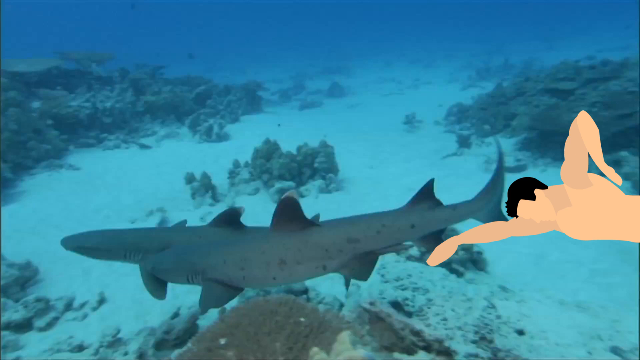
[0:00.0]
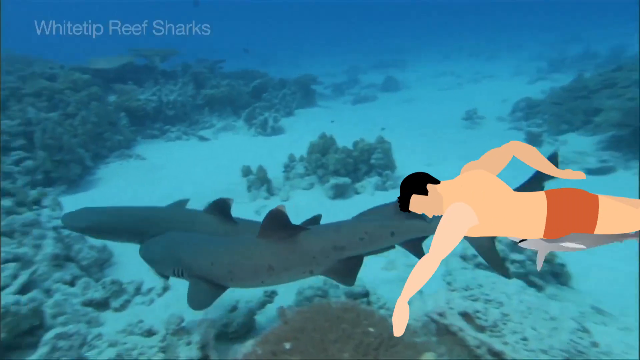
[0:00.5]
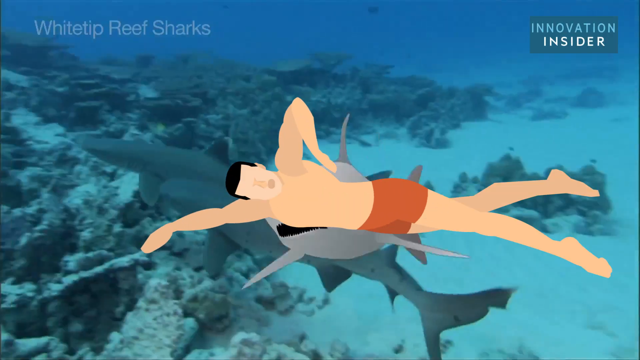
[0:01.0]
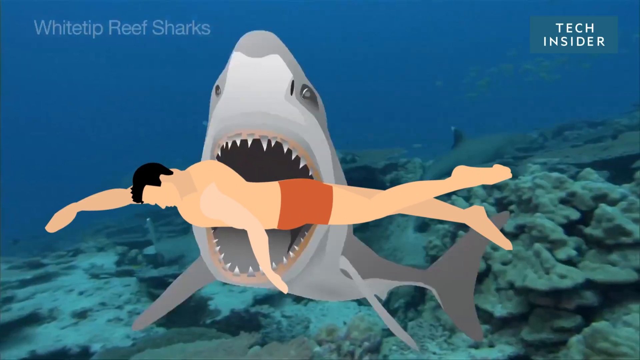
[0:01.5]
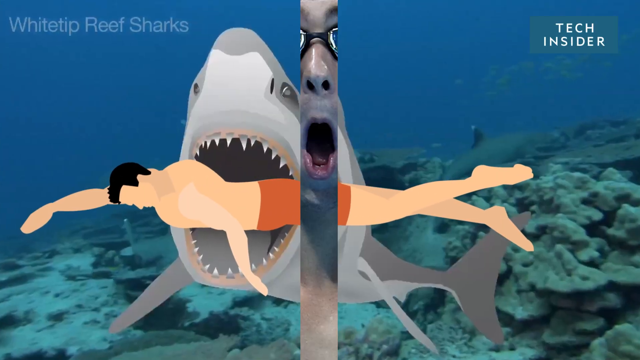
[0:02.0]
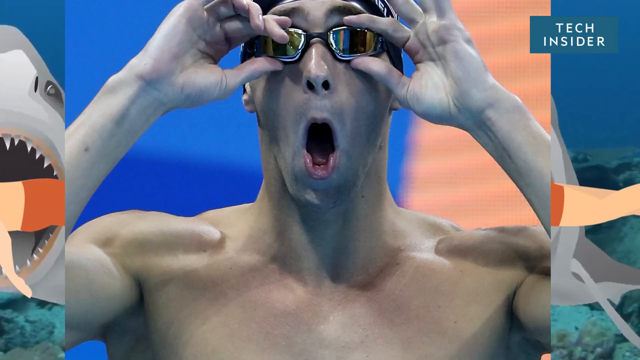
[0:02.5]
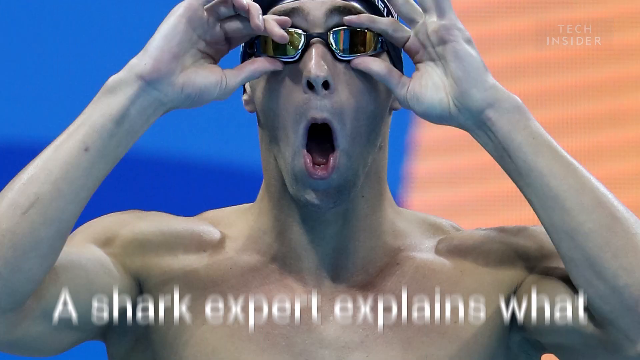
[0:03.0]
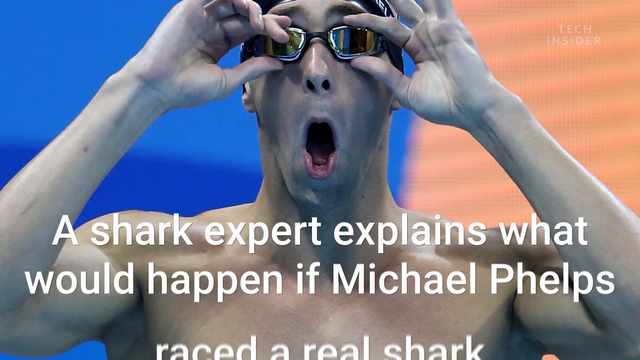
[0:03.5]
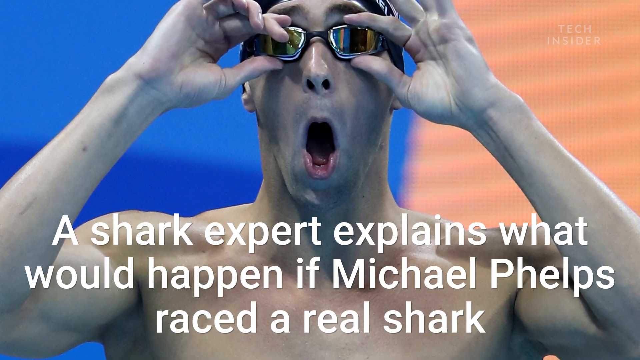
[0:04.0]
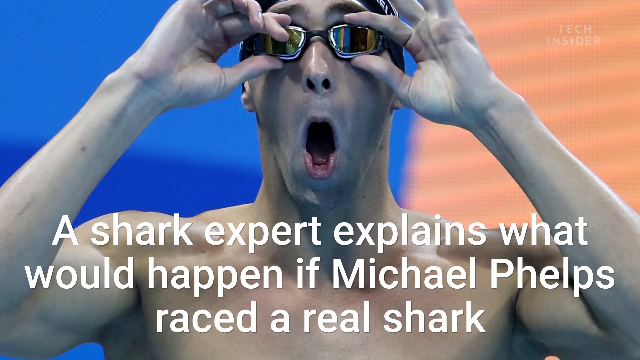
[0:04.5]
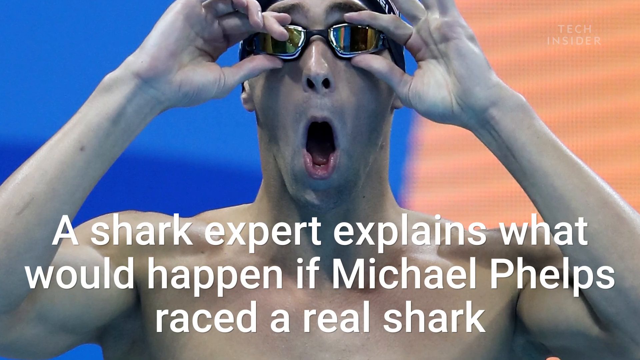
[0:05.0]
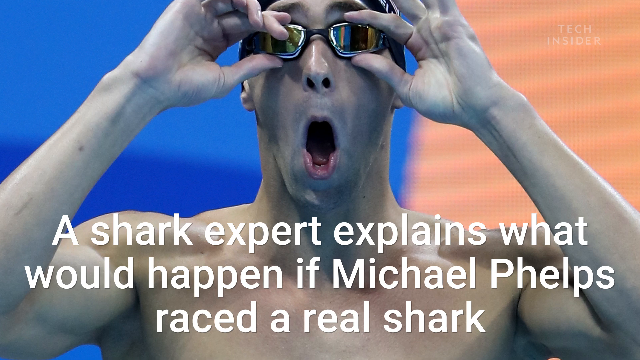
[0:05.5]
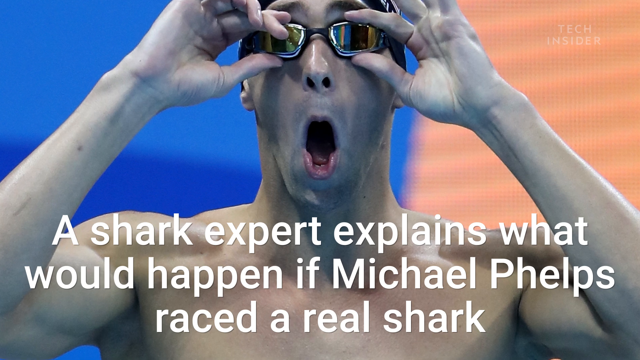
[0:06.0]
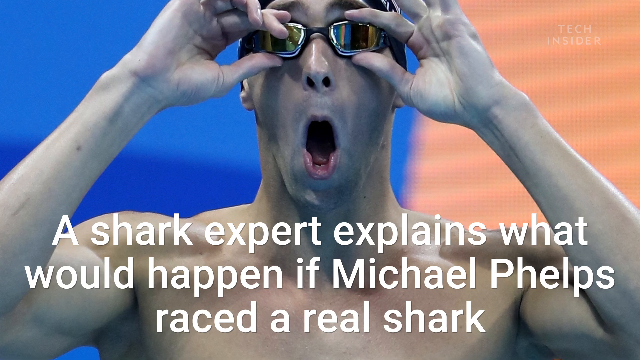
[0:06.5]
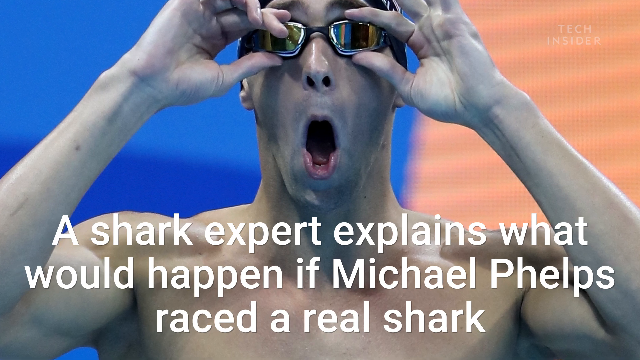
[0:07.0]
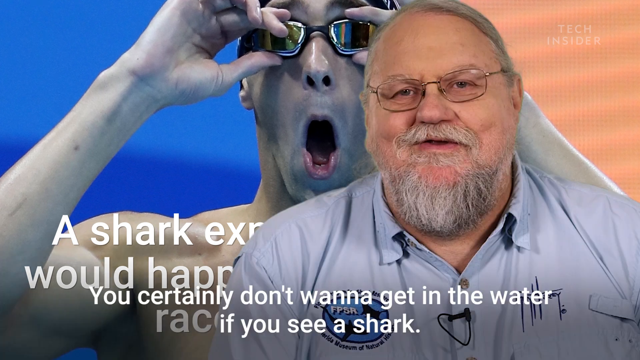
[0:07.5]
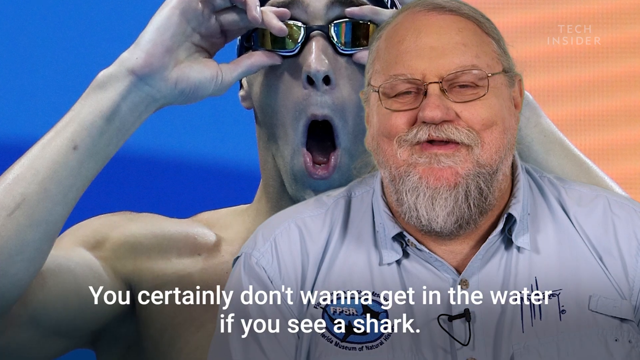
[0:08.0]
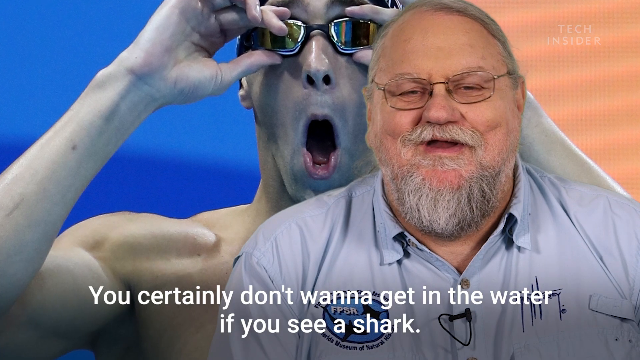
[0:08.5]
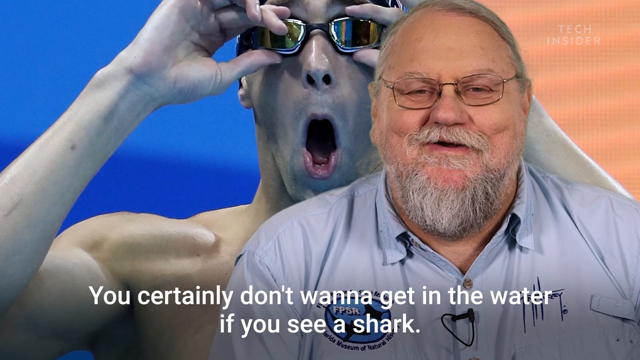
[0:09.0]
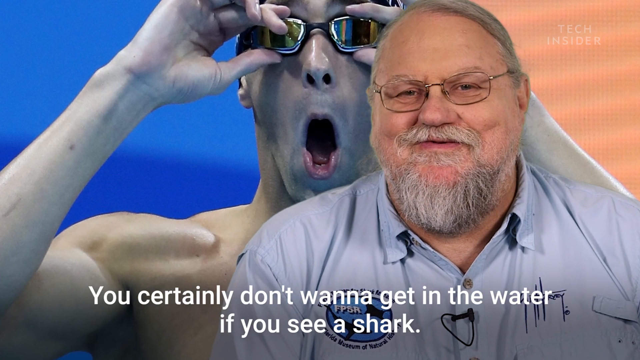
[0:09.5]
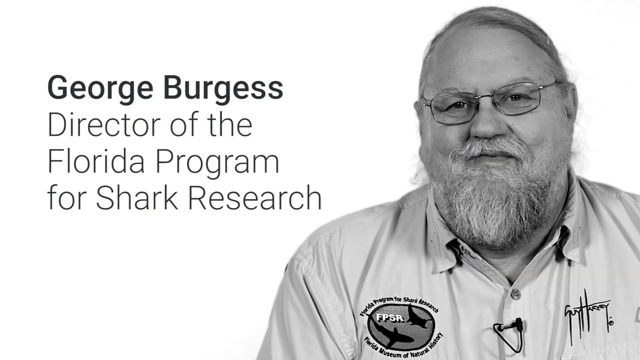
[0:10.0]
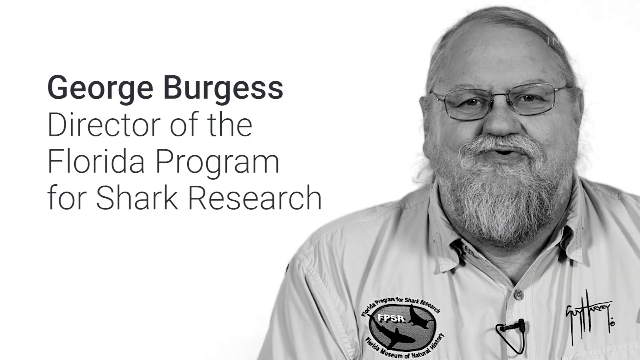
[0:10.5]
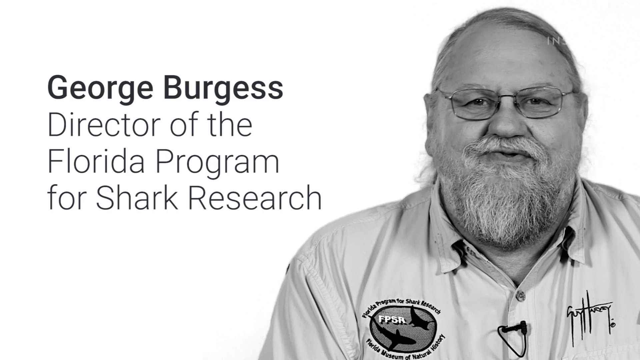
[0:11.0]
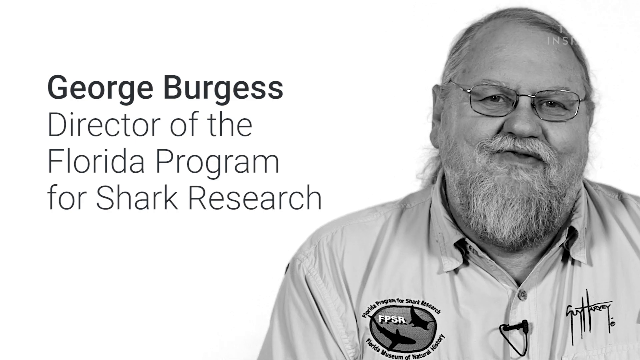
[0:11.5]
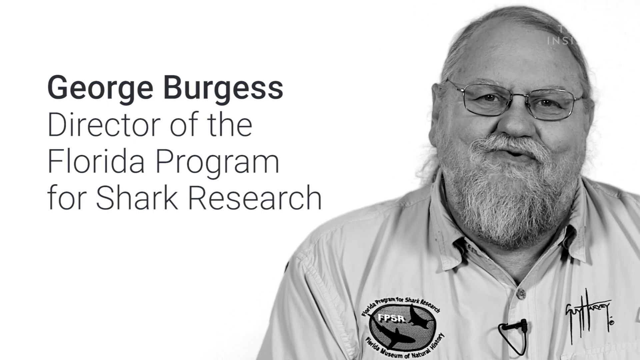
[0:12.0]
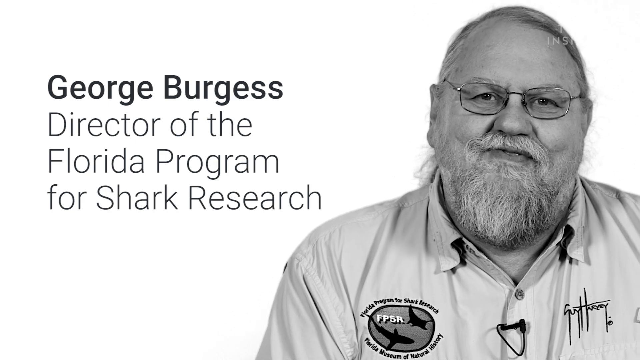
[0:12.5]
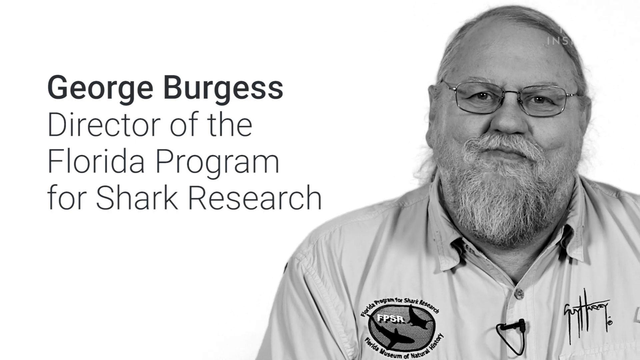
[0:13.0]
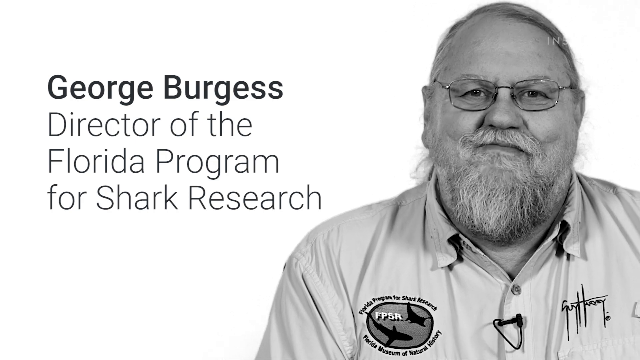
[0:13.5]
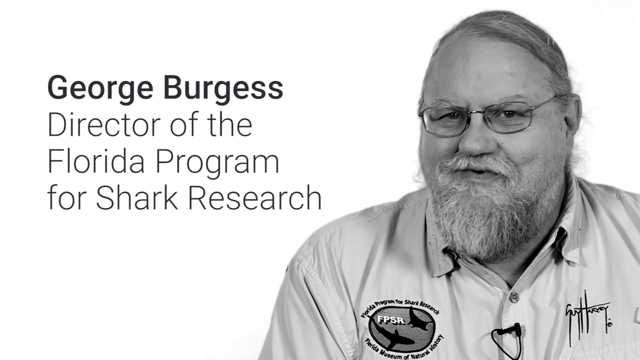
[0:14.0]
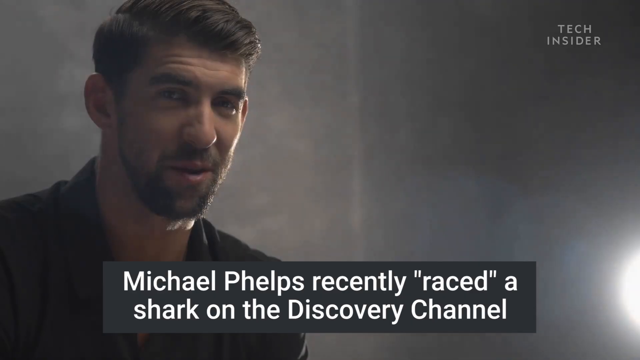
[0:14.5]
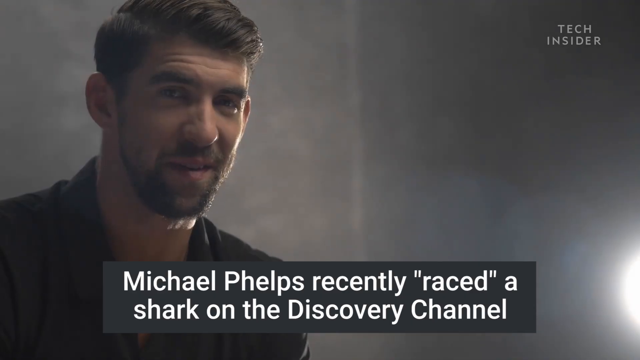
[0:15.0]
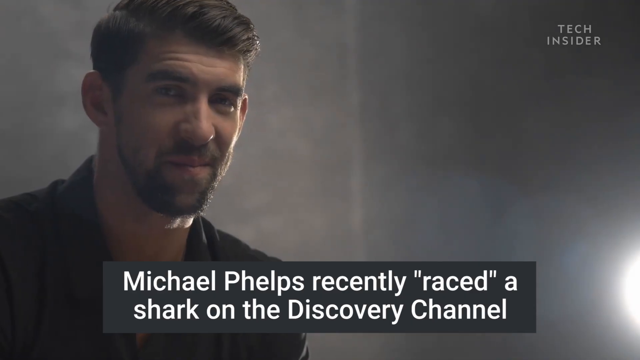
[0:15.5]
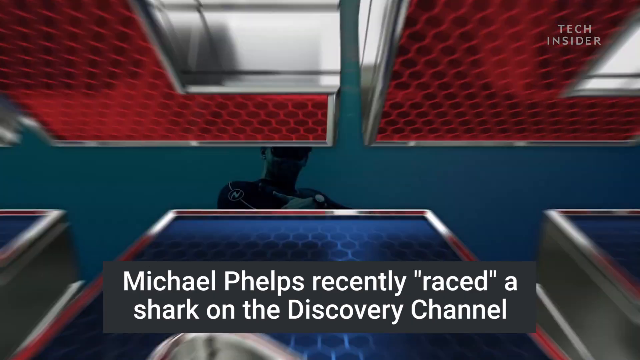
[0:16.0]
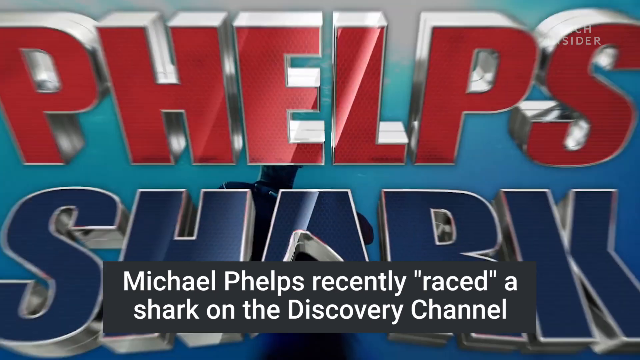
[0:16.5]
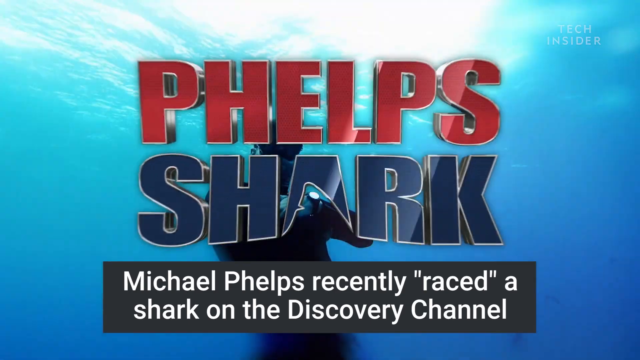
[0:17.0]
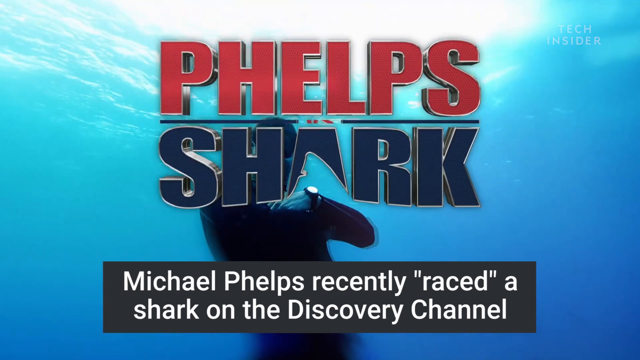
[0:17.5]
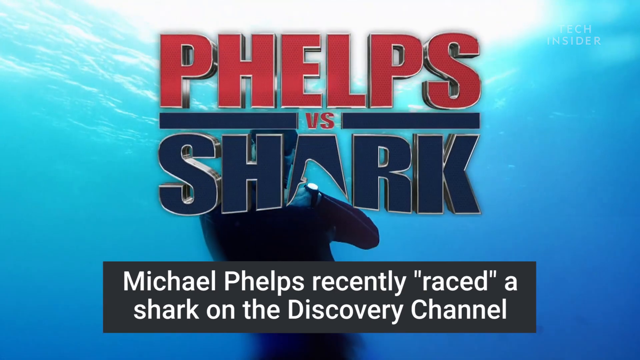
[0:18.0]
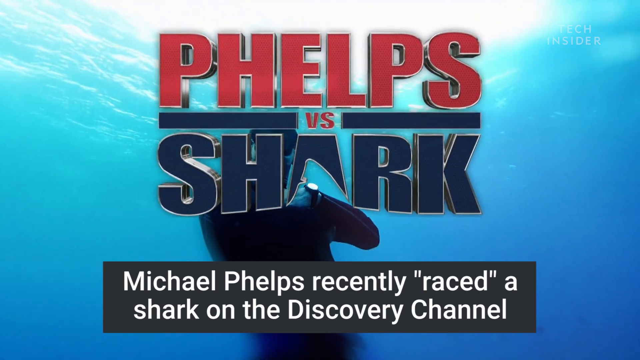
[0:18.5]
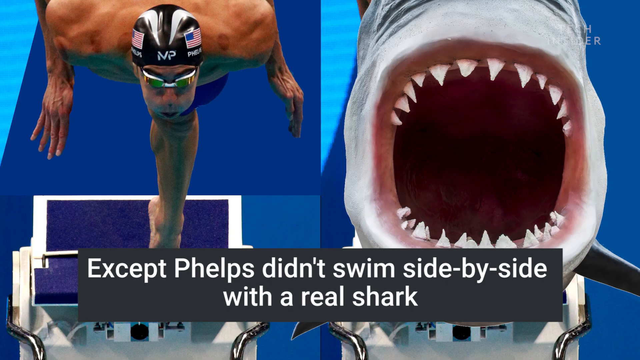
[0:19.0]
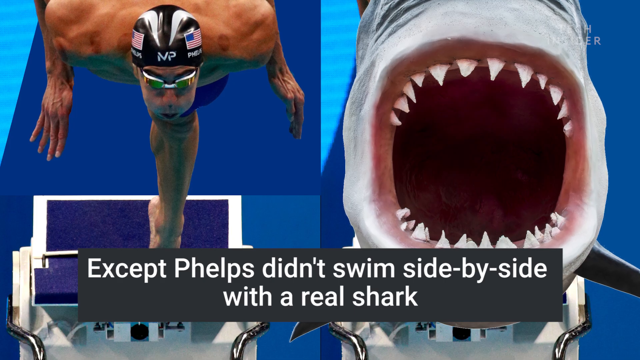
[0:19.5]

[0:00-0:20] The video starts with a cartoon of Michael Phelps swimming a lap in a pool, then opens up to pictures of Phelps. Interviews with Michael Phelps are shown, along with Phelps's physique.